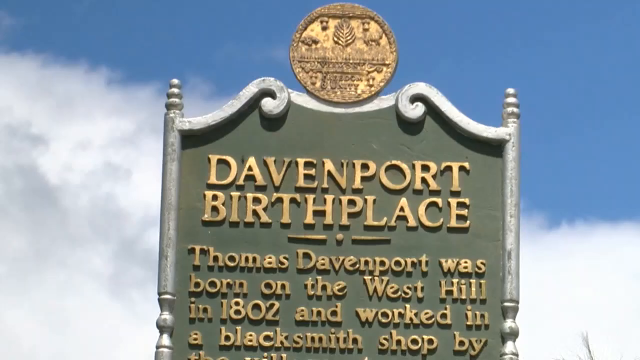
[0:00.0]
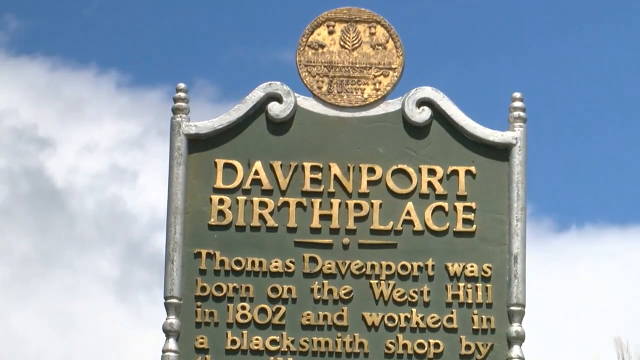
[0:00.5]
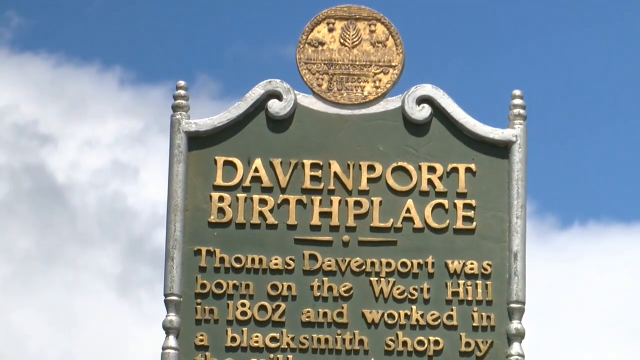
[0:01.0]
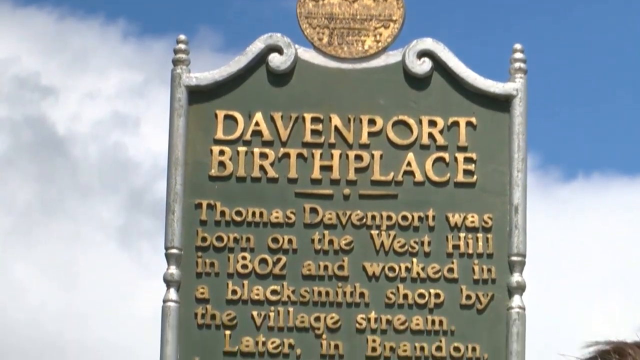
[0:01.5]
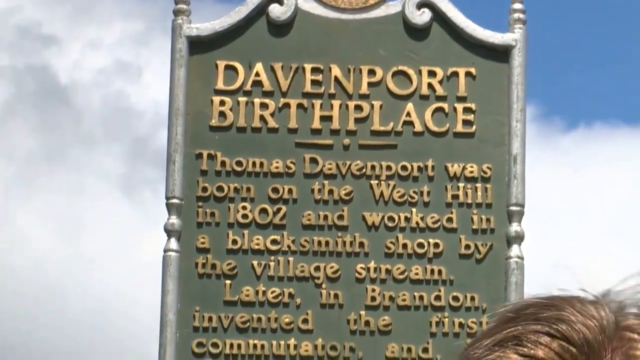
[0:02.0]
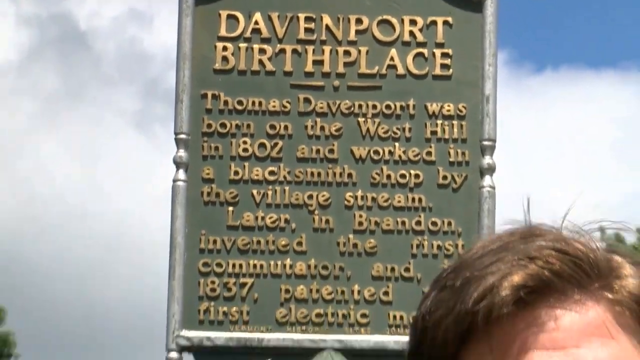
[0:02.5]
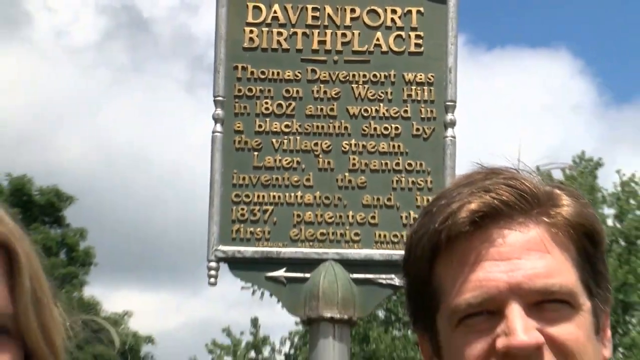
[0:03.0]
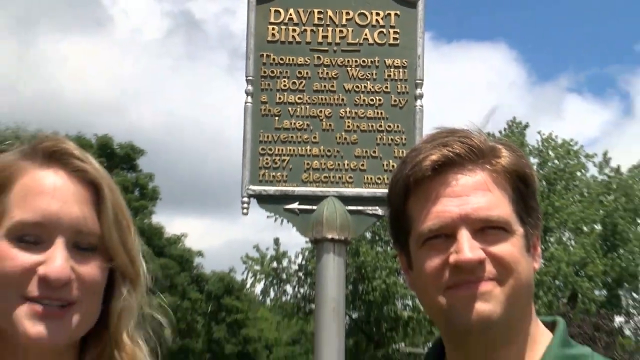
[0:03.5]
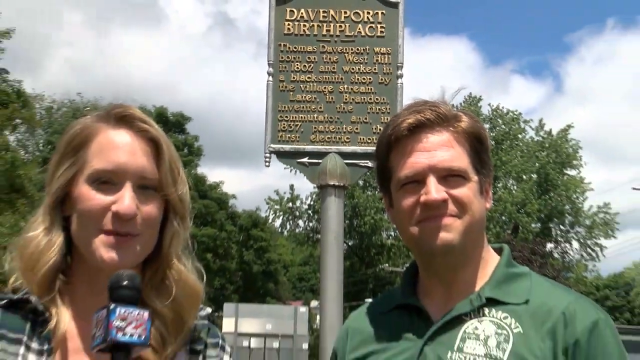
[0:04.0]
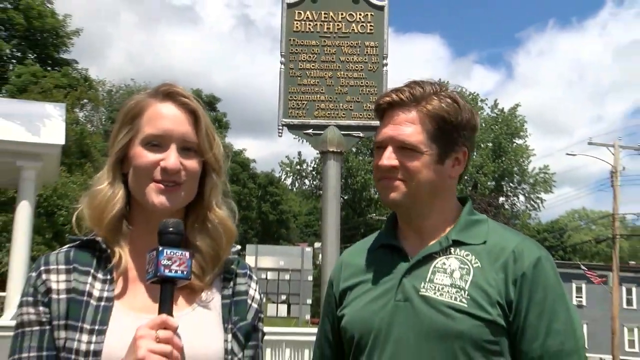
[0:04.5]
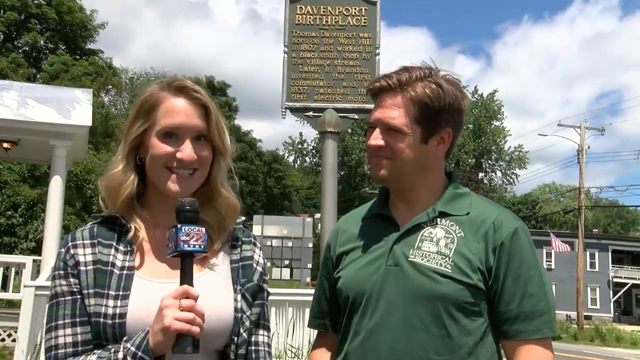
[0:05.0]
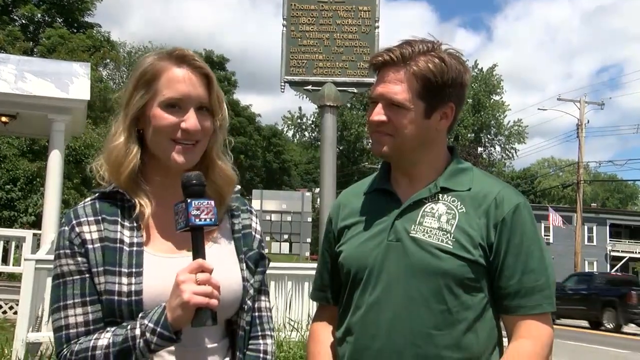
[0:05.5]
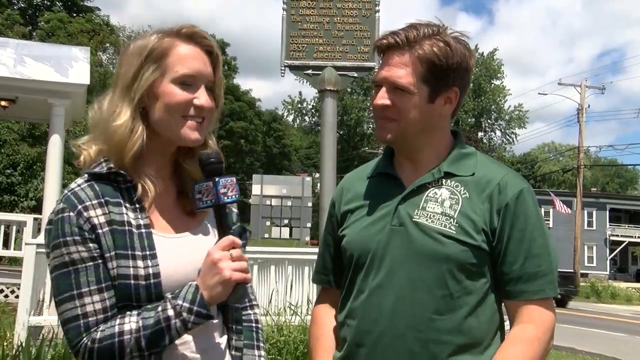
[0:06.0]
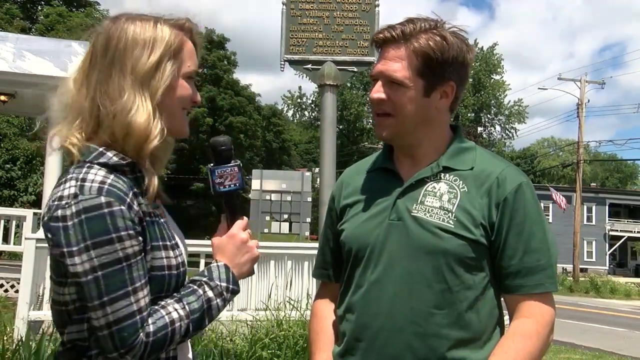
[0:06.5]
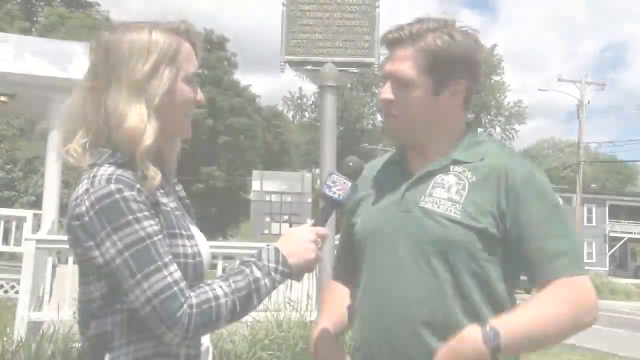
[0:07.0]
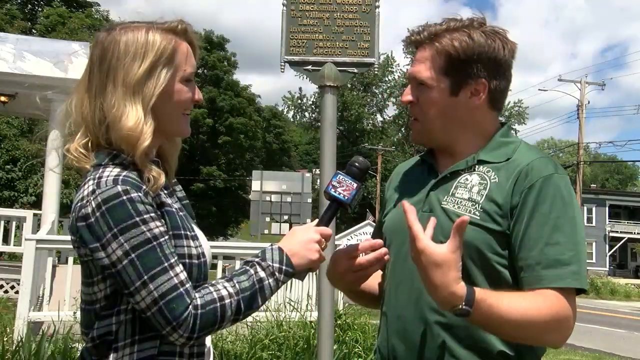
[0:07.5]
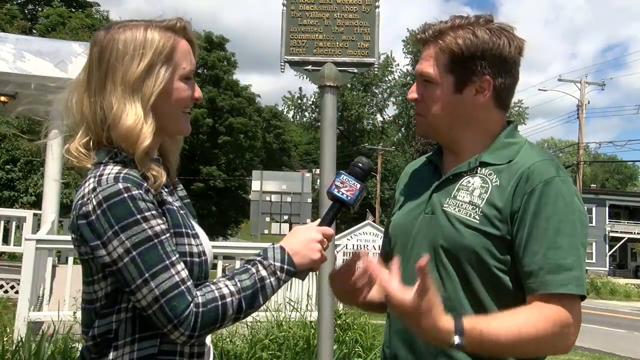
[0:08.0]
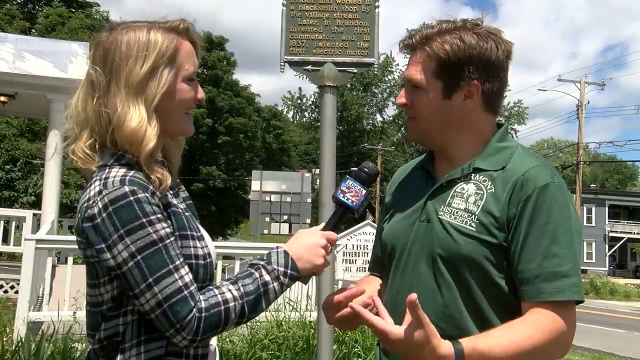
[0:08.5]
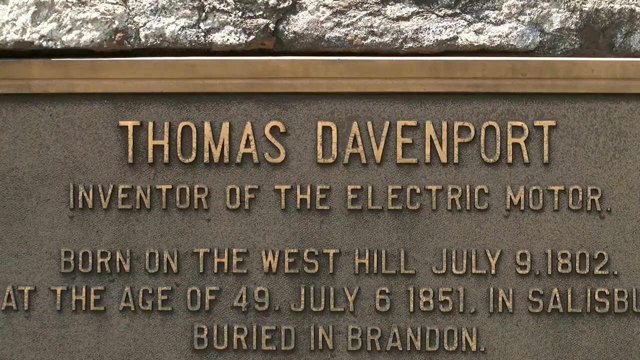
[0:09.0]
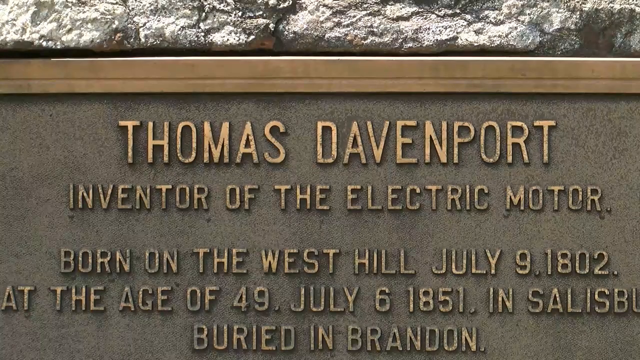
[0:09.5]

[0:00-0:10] A sign with a green background and gold letters reads "Davenport Birthplace. Thomas Davenport was born on the West Hill in 1802 and worked in a blacksmith shop by the village stream. Later in Brandon, invented the first commutator and in 1837, patented the first electric", and the rest is cut off by a person's head in front of it. There seem to be two people: one, a woman, seems to be a reporter holding a microphone, and the person covering the last word is a man in a green shirt who seems to be getting interviewed by her. They talk, and the woman holding the microphone places it closer to the man's mouth. He starts talking, using his hands to express himself.